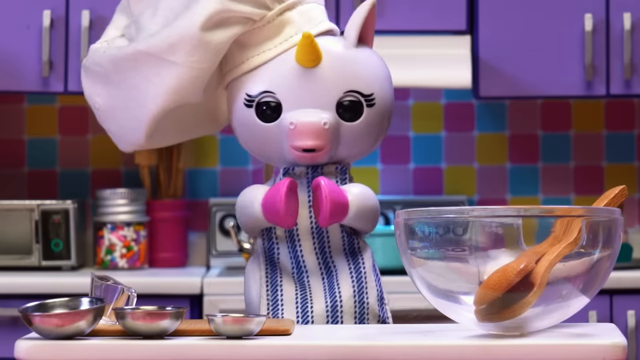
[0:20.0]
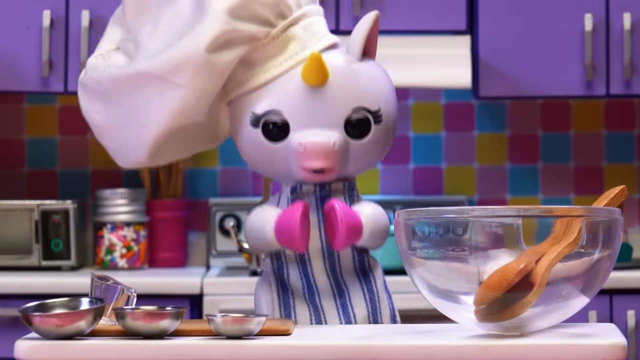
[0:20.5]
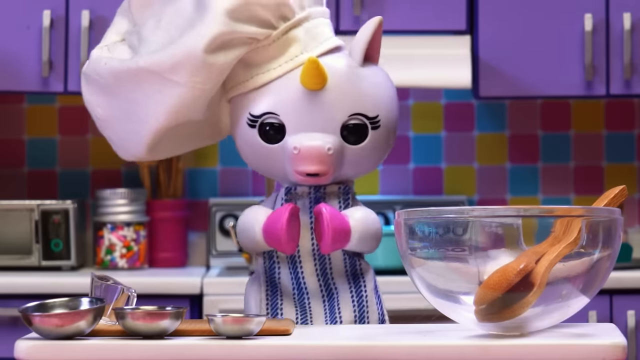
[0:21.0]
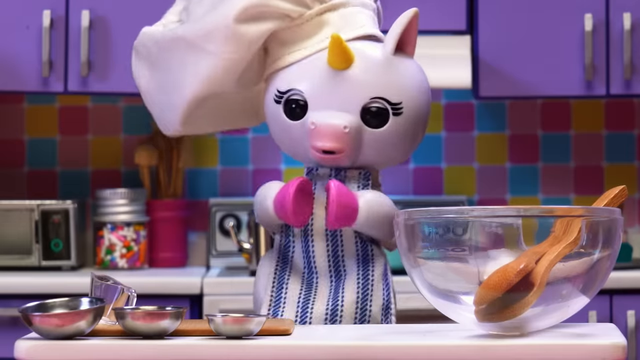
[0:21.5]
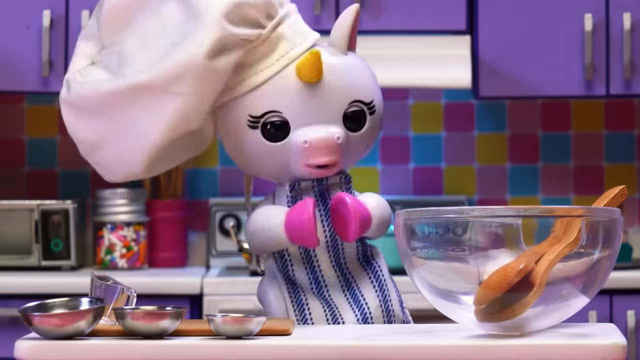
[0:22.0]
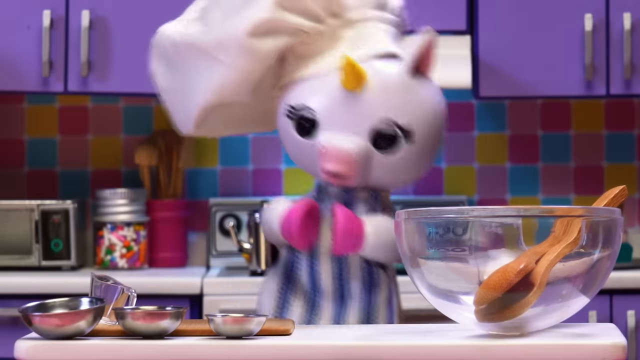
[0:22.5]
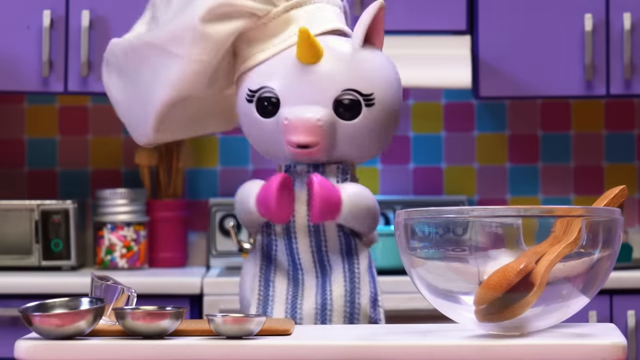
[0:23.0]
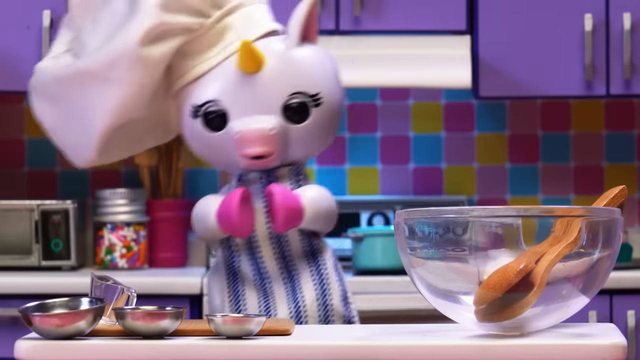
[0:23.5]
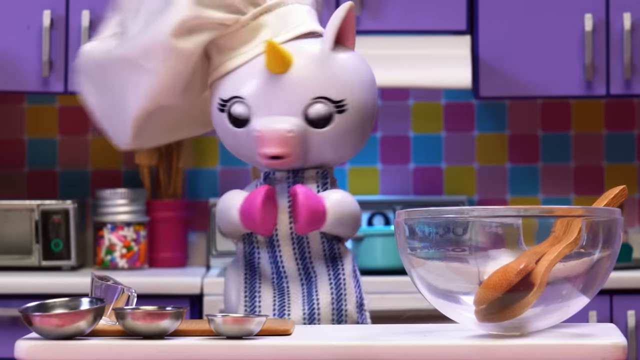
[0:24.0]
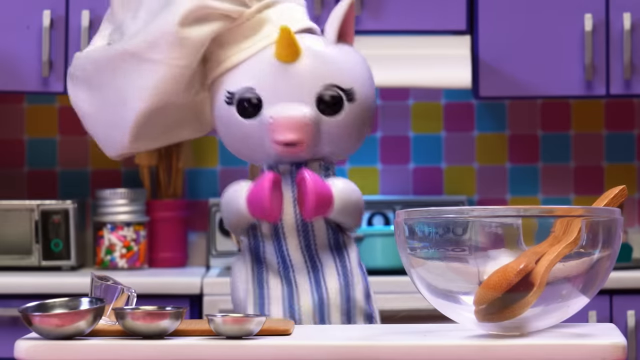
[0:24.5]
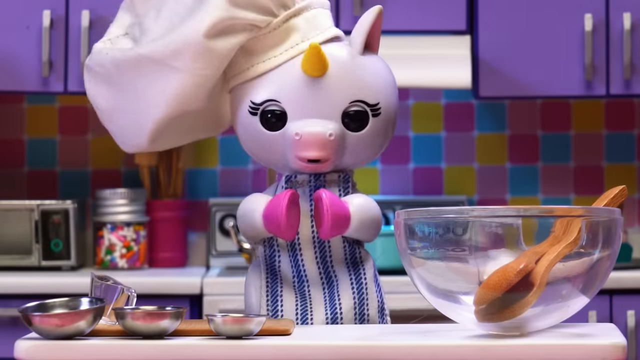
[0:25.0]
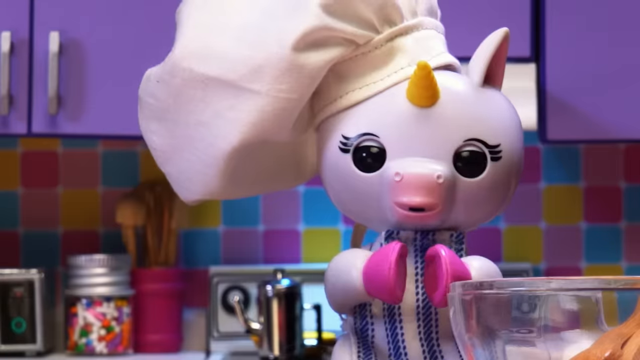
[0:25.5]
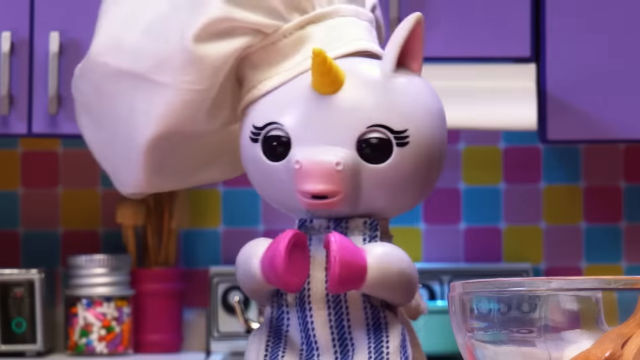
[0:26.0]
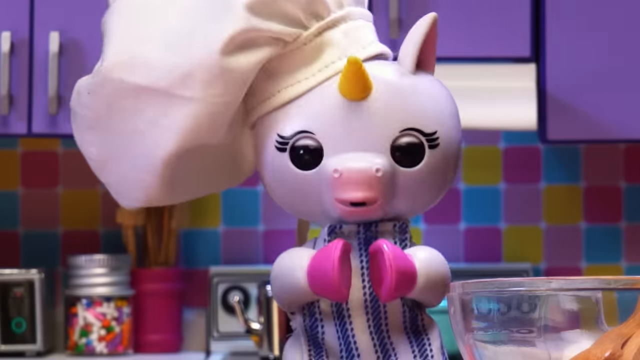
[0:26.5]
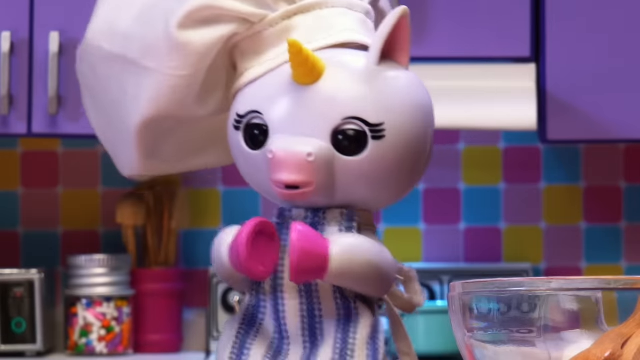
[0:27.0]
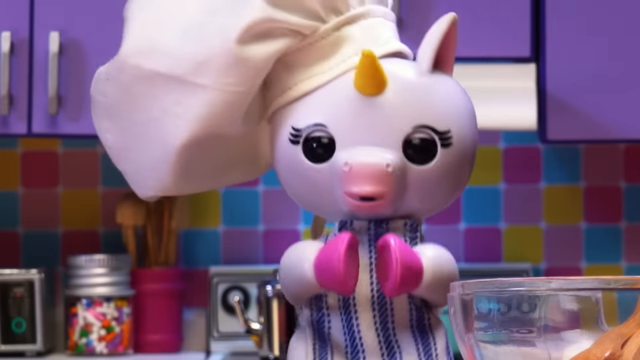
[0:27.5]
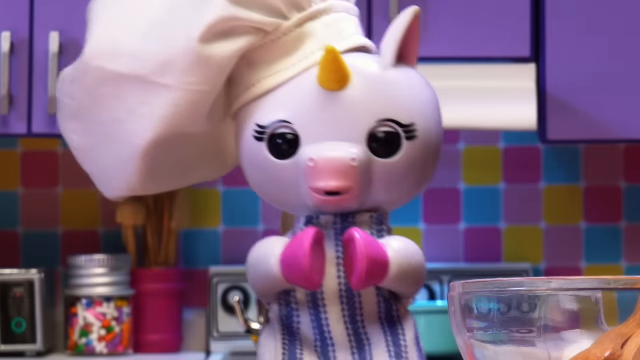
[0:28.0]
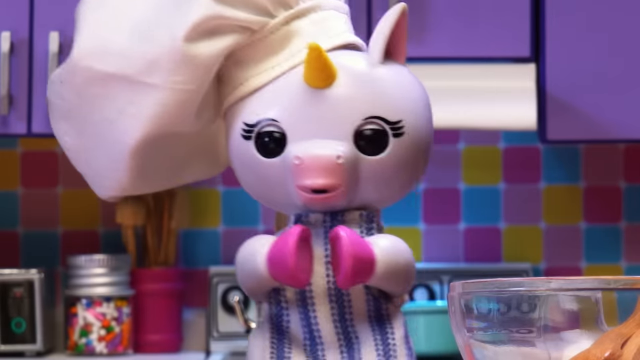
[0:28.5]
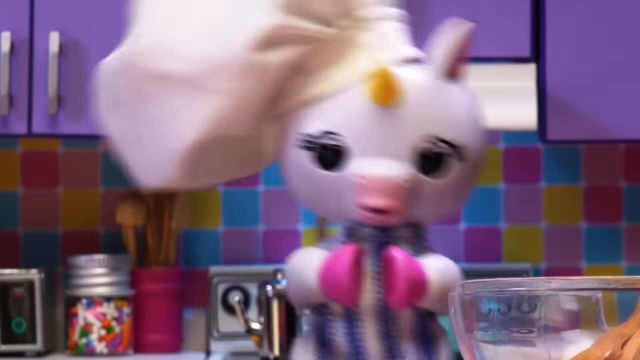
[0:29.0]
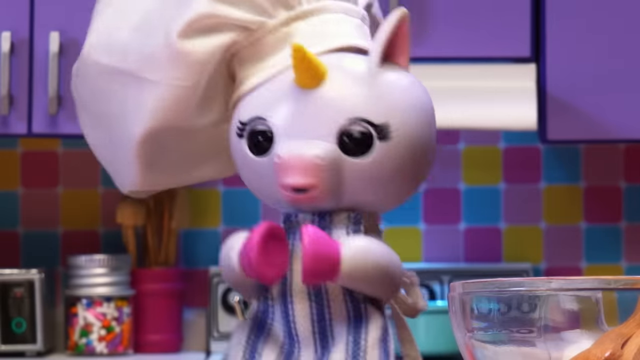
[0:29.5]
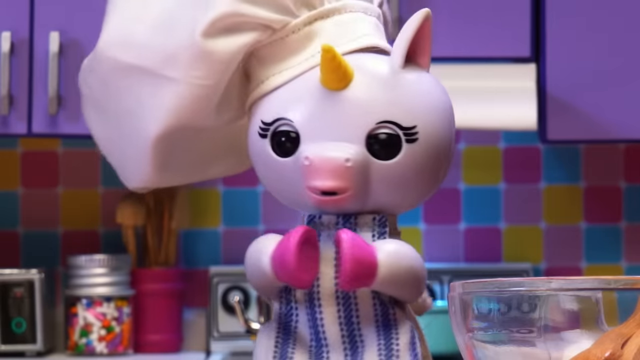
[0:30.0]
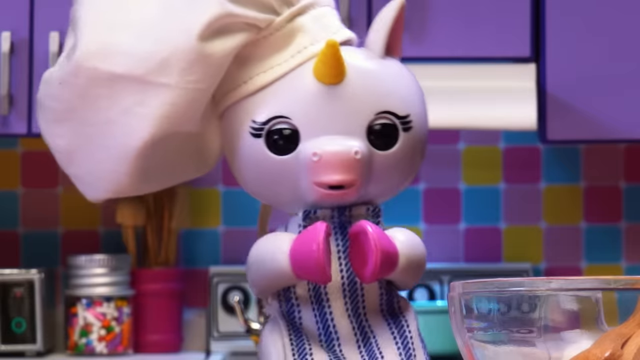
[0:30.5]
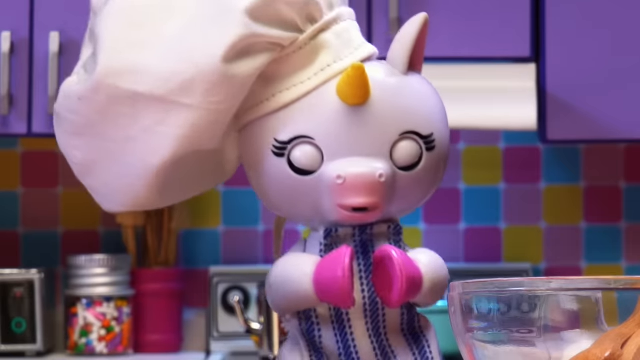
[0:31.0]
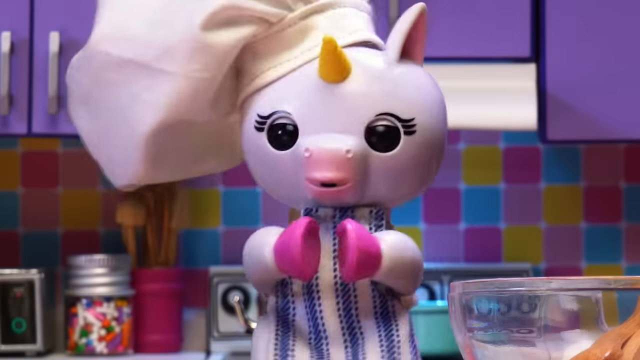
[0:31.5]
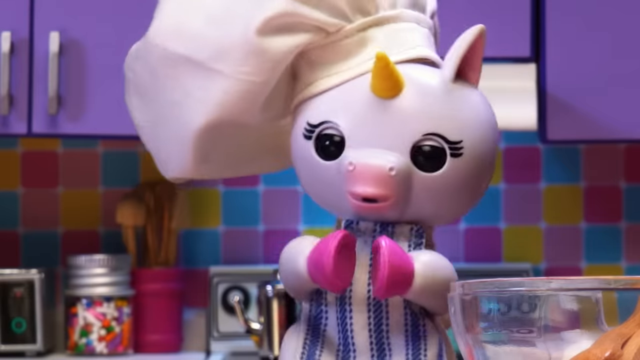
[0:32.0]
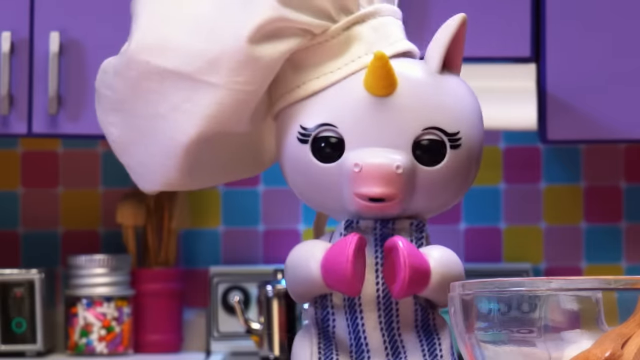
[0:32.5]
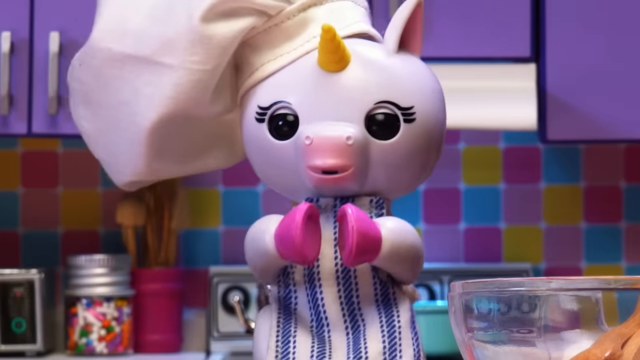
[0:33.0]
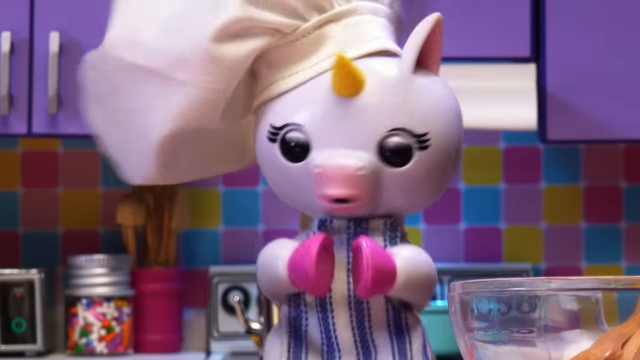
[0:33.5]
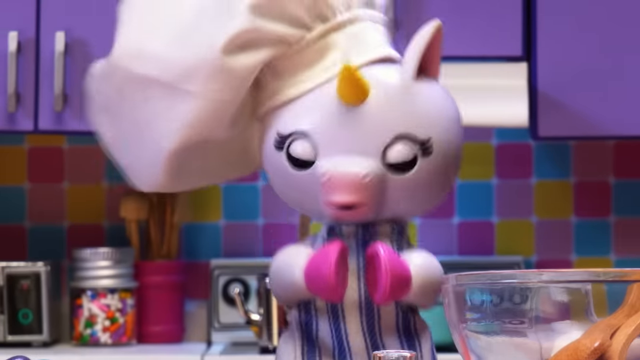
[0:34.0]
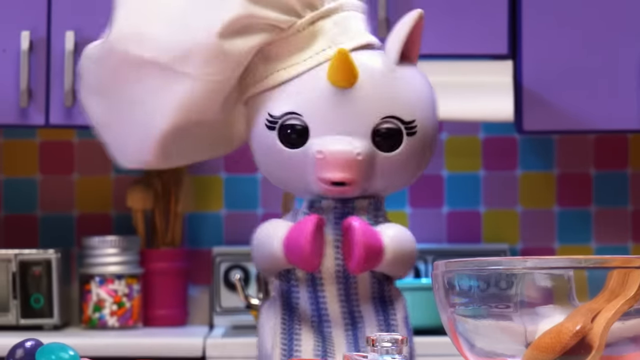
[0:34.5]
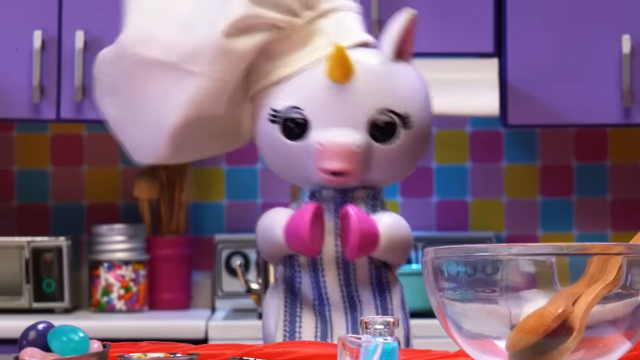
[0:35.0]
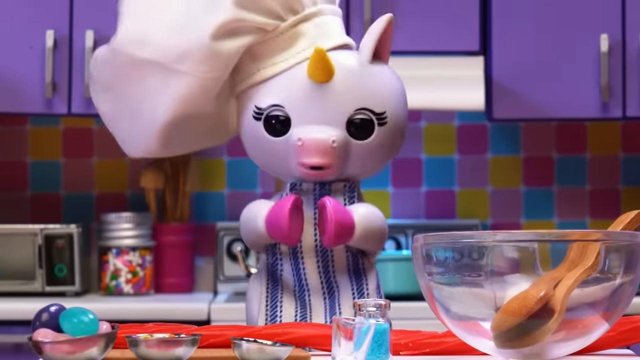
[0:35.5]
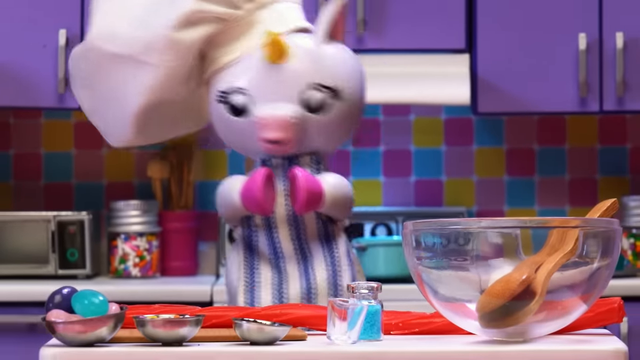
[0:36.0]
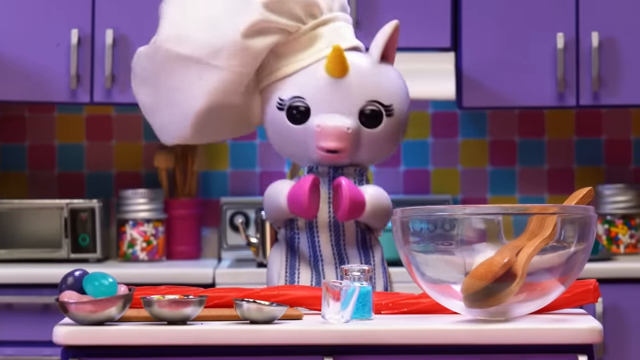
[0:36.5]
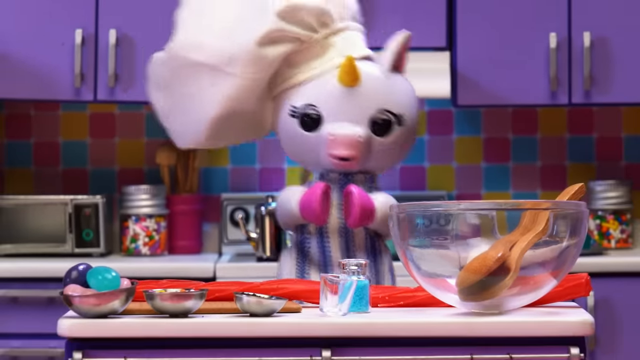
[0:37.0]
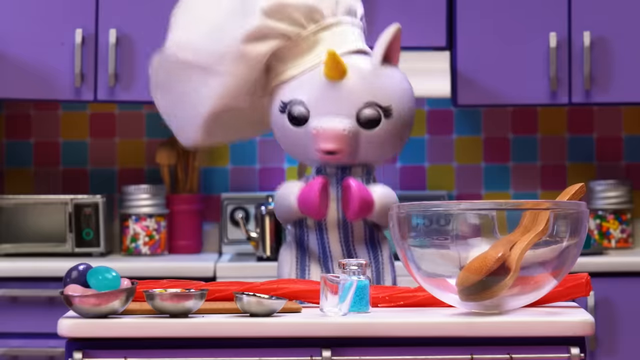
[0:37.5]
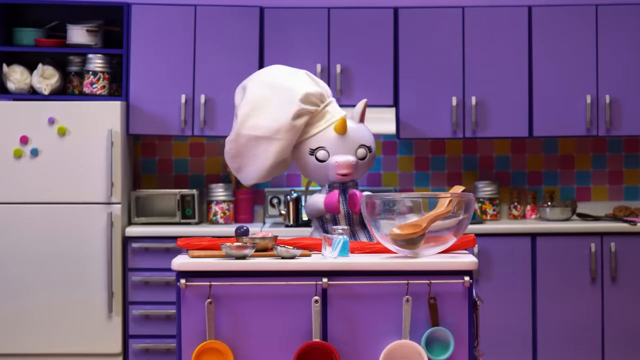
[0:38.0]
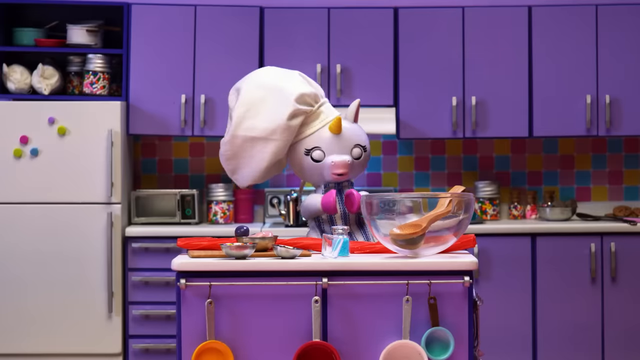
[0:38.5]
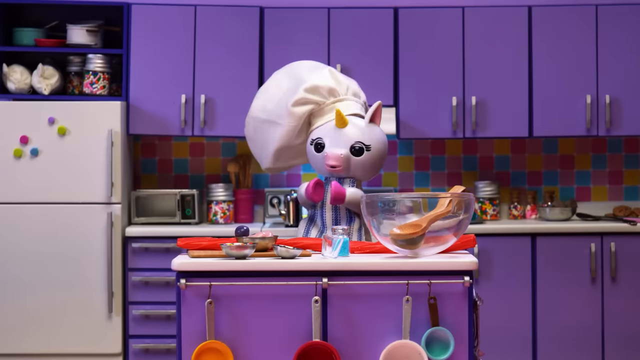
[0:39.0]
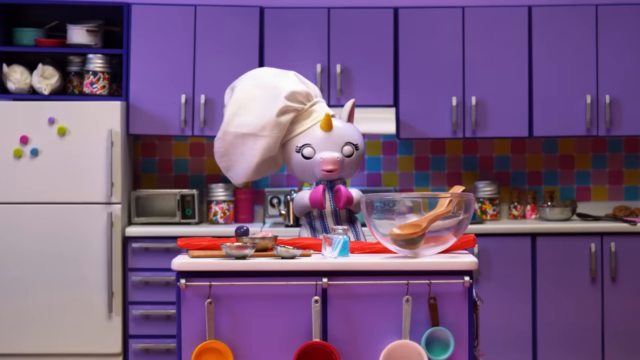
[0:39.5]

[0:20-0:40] In a close-up shot, the unicorn moves back and forth, to the left and then to the right, blinking a lot; her movements suggest she may be talking. The shot then gets closer so that mainly her face, arms and shoulders are visible. The glass bowl with the wooden spoons in it is still visible. She stands behind the island but in front of the stove, and there looks like there might be a Tiffany Blue pot on top of the stove behind her. The tile backsplash of the kitchen is clearly visible, colorful with pinks, yellows and blues. The background appears slightly blurred behind her, keeping the focus on the unicorn.